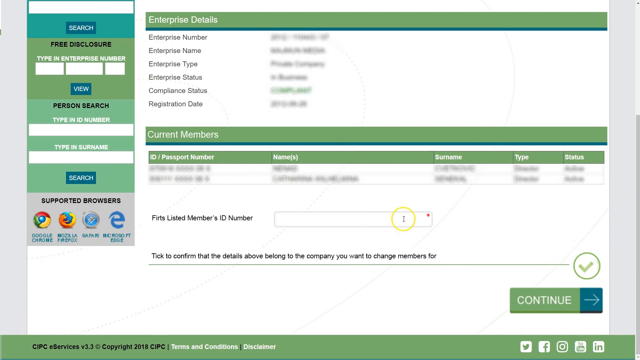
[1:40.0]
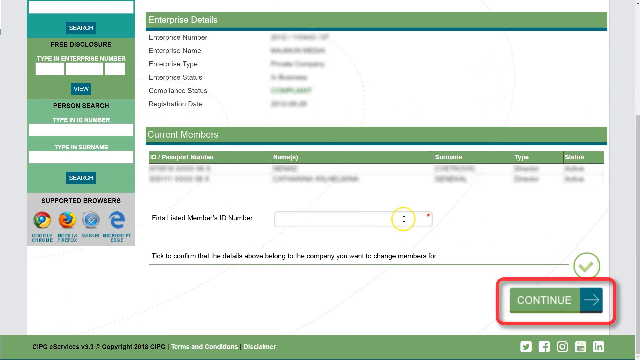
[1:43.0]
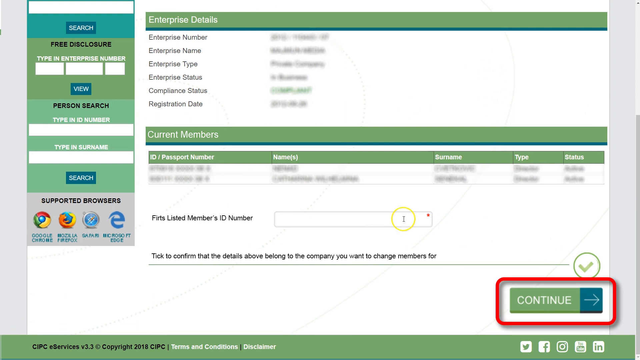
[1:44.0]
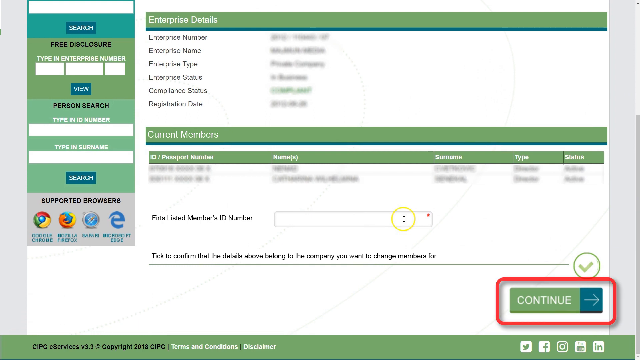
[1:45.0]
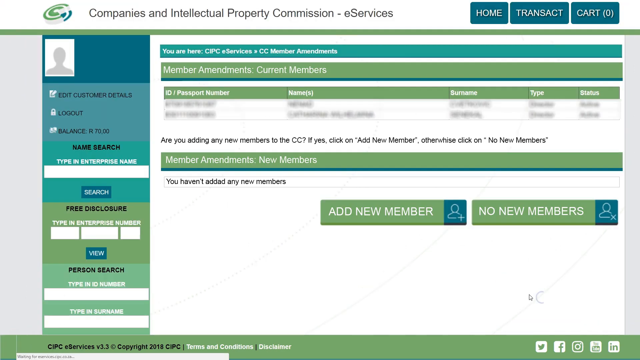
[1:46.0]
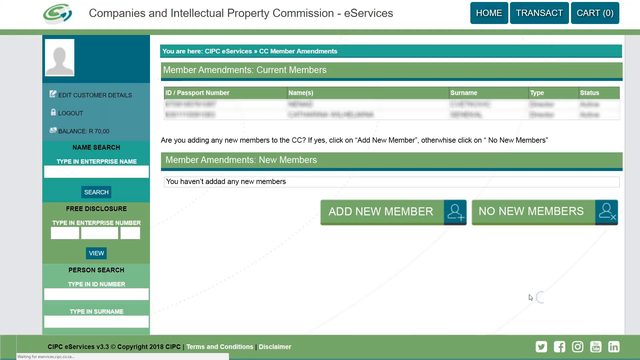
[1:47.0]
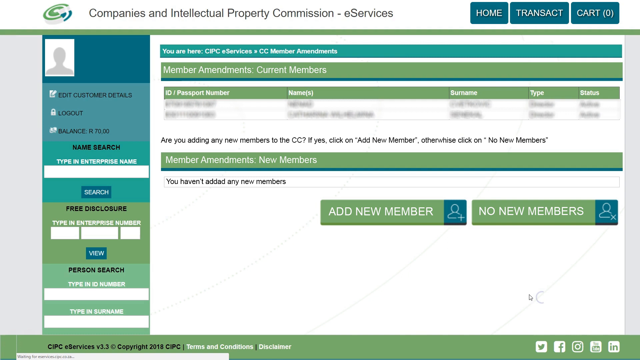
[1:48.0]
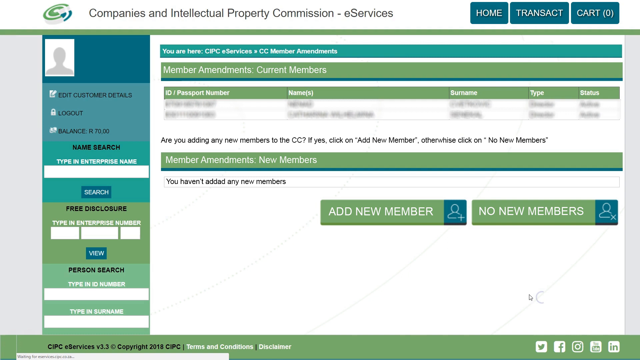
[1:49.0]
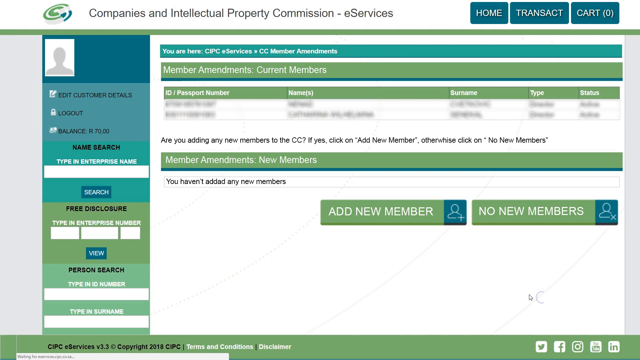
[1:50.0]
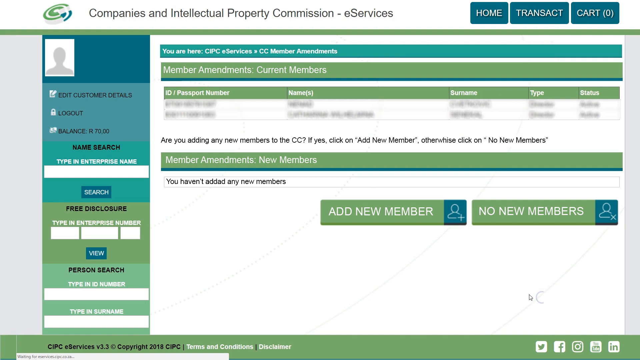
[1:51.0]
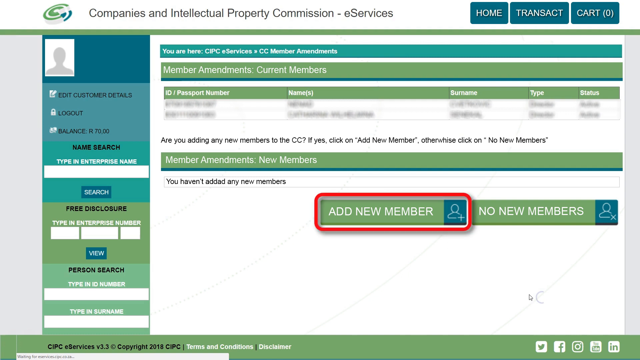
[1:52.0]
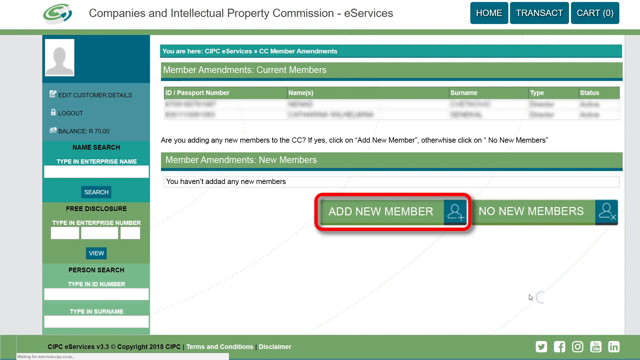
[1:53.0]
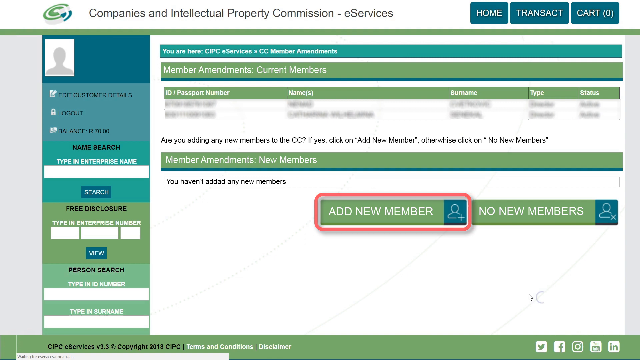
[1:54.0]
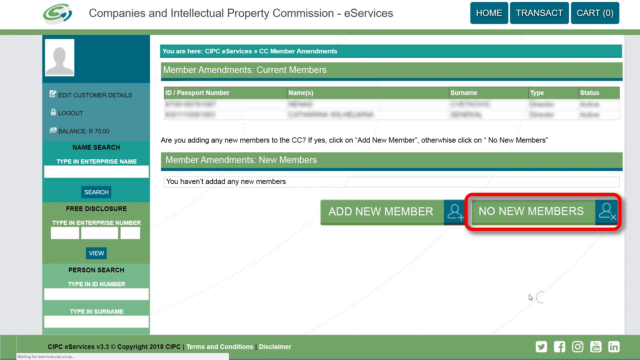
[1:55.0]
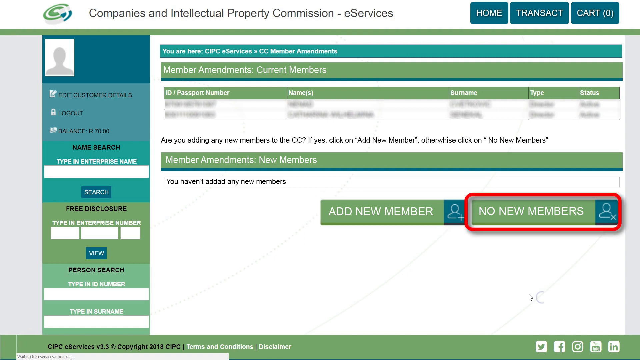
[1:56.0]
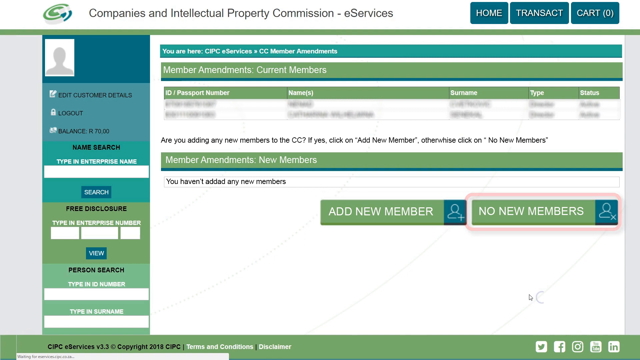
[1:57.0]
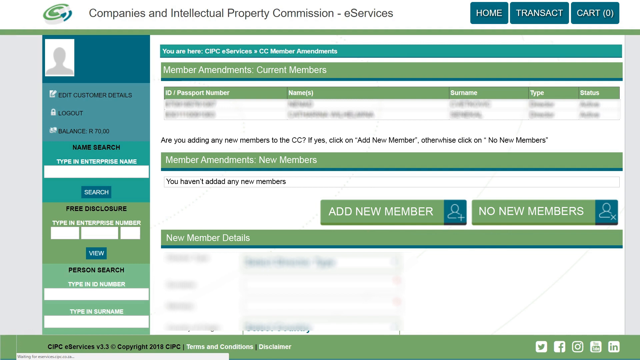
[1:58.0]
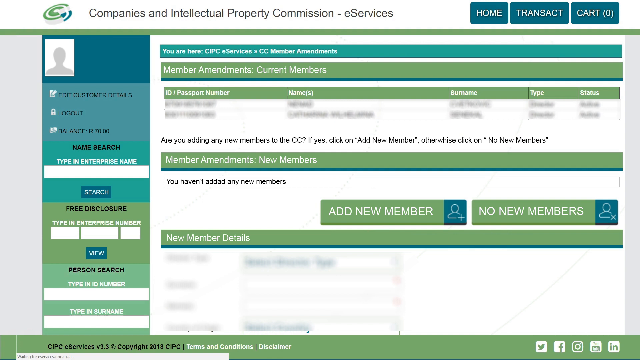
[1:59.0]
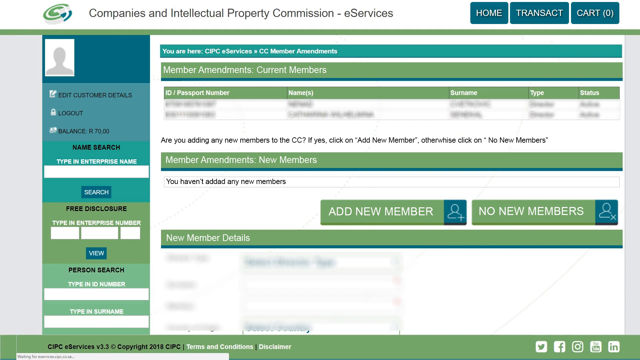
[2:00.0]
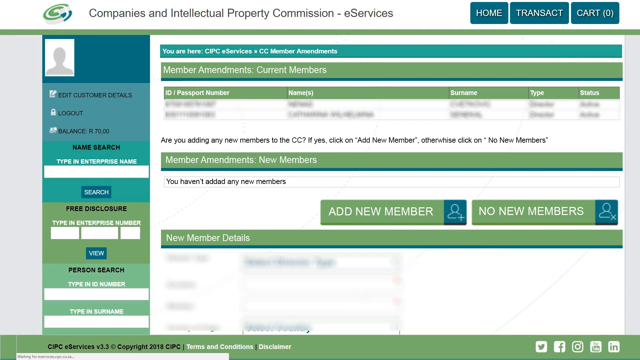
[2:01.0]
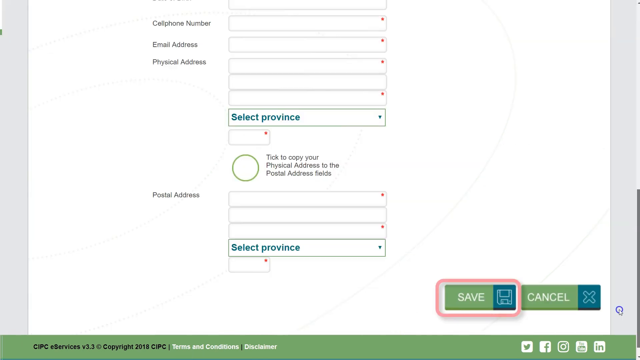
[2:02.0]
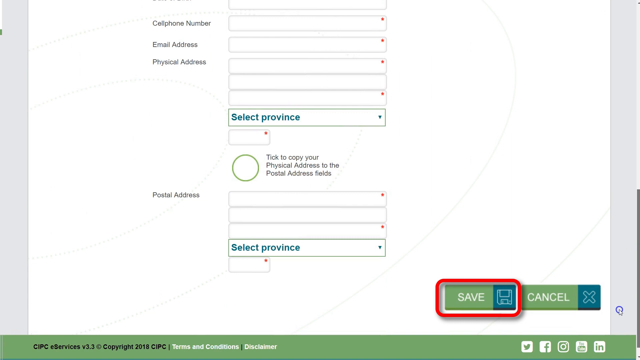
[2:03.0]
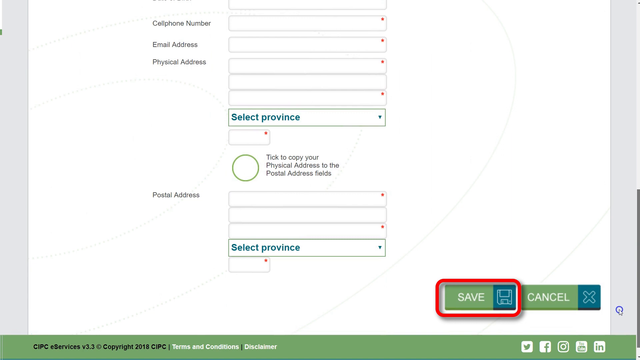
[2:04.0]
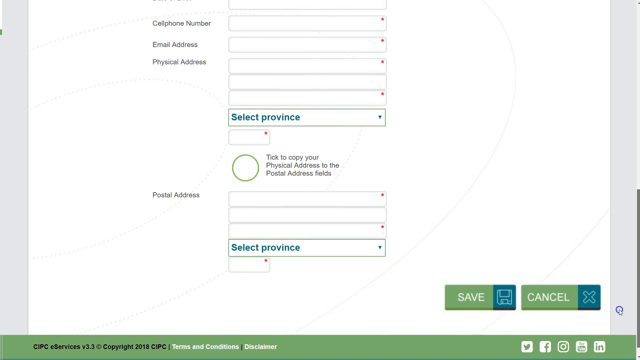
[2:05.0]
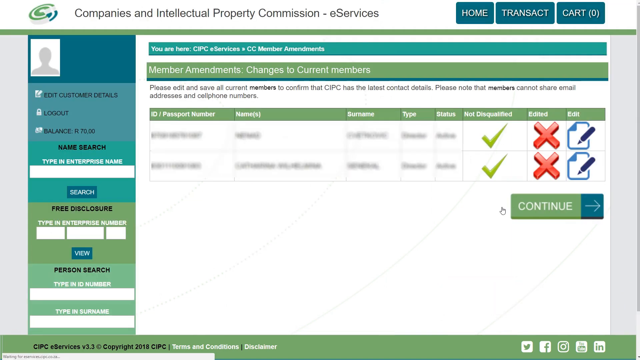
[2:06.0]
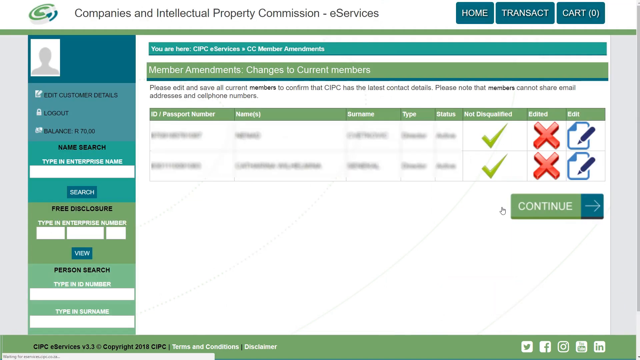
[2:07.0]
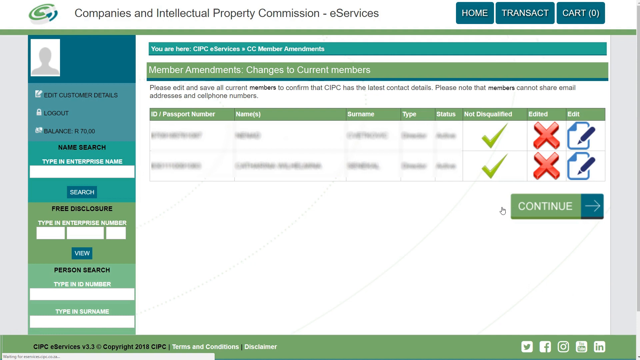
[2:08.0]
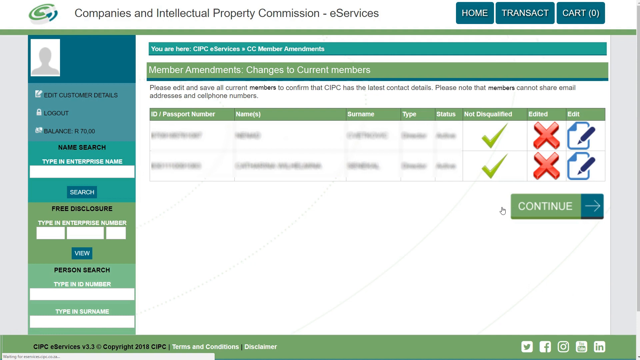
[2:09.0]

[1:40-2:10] The screen is divided in two, with two sections under a green bar containing information. Another screen follows, a person search screen as well as a free disclosure screen. It says "add new member" and "no new member"; "no new member" is highlighted in red, and then it says "new member." There are places to enter credentials and information, including a passport number. The member's ID number field is circled in yellow, and the entry looks like it is verified. Text reads "tick to confirm that the details above belong to the company you might want to change members for." In the lower right corner is a green circle with a green check mark in it, apparently meaning all the information has been added.